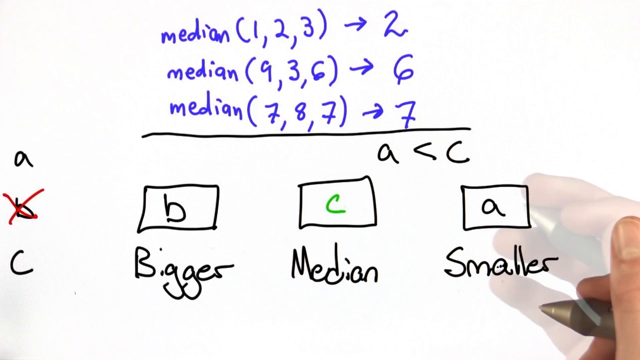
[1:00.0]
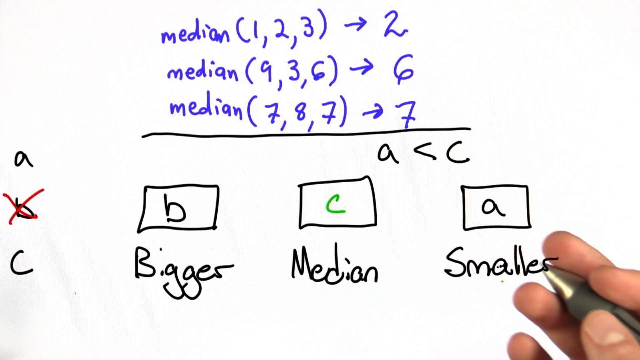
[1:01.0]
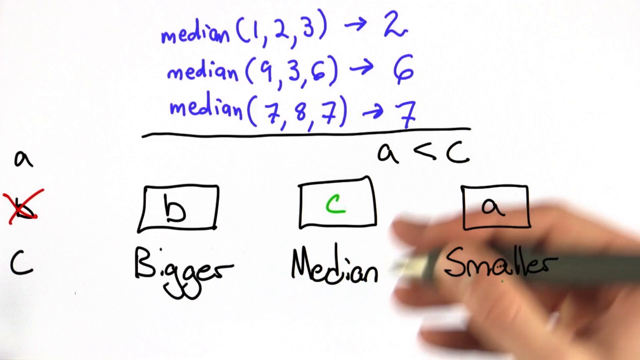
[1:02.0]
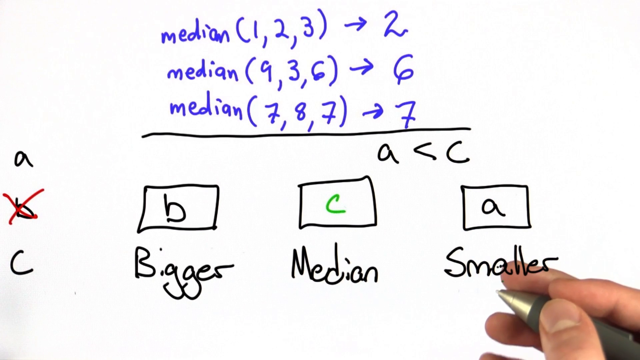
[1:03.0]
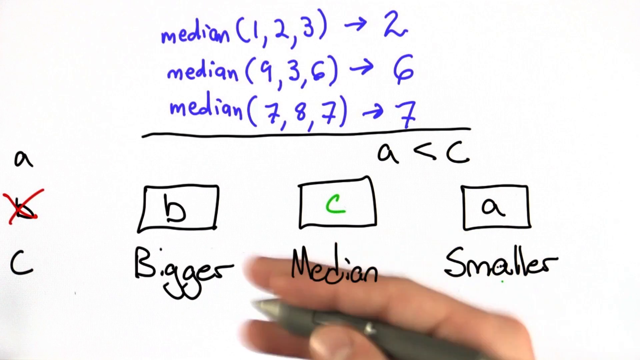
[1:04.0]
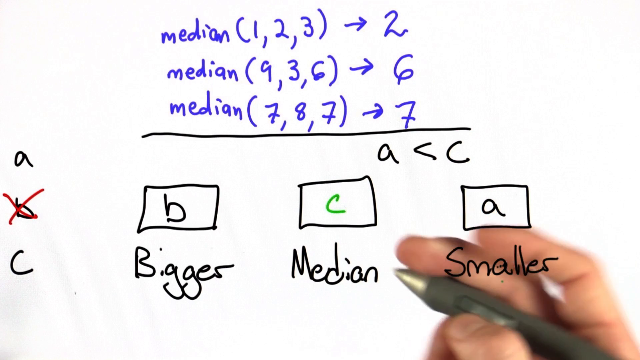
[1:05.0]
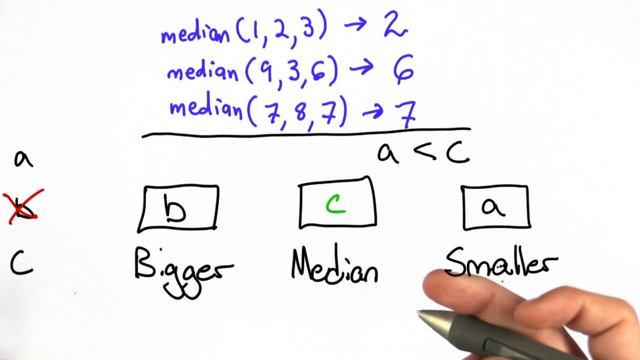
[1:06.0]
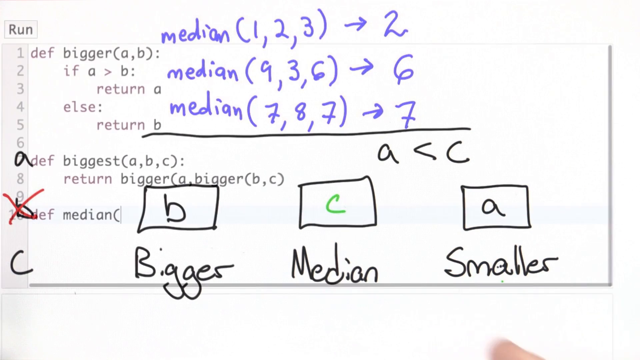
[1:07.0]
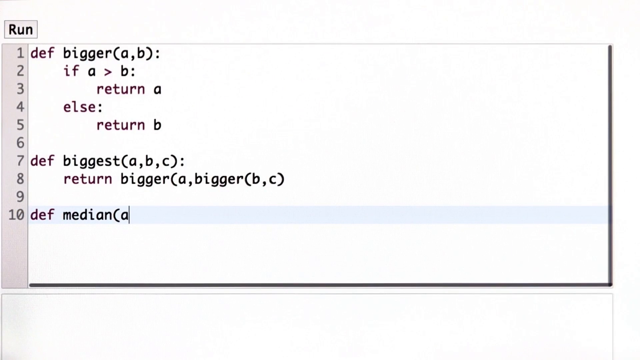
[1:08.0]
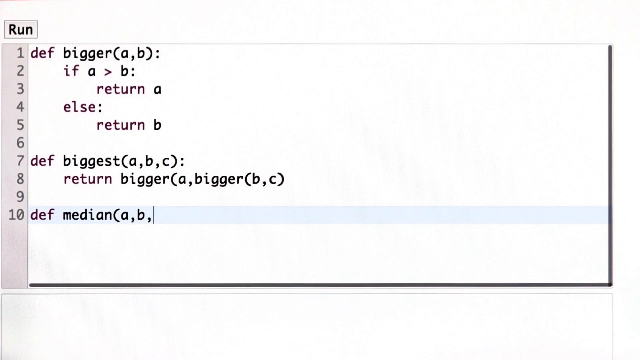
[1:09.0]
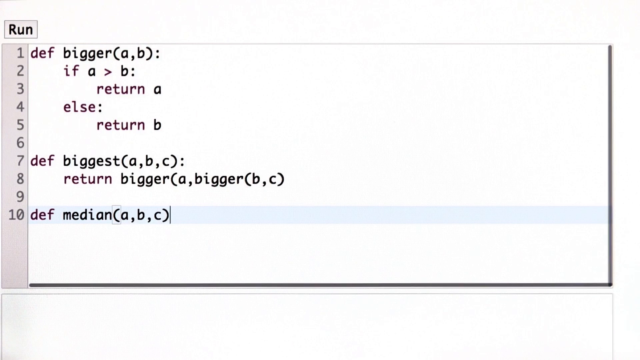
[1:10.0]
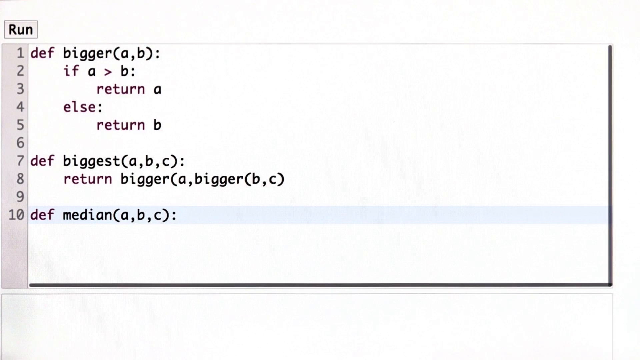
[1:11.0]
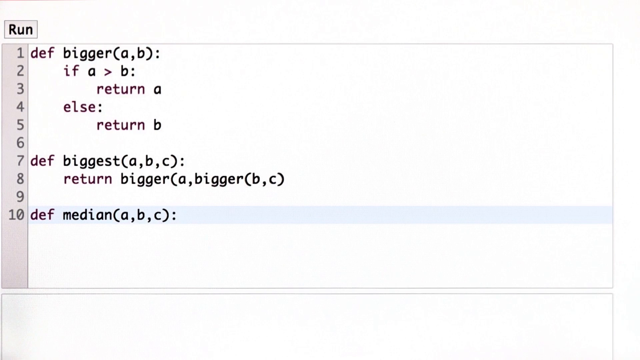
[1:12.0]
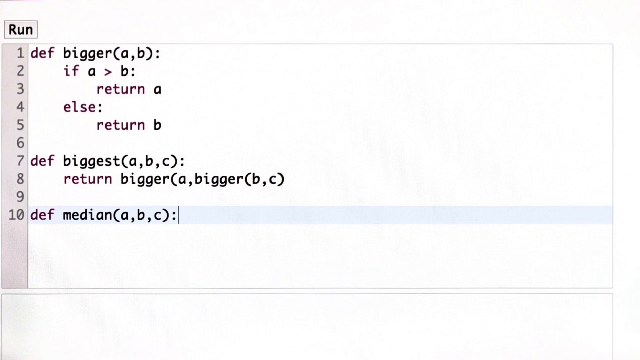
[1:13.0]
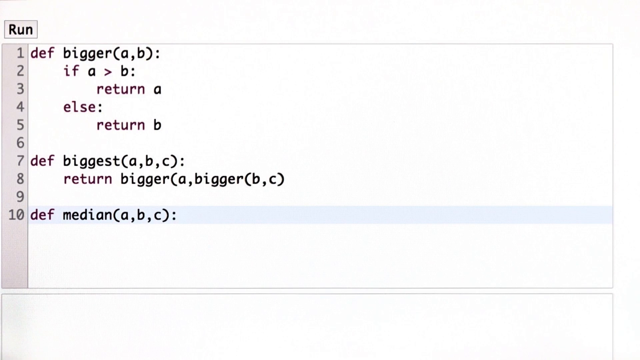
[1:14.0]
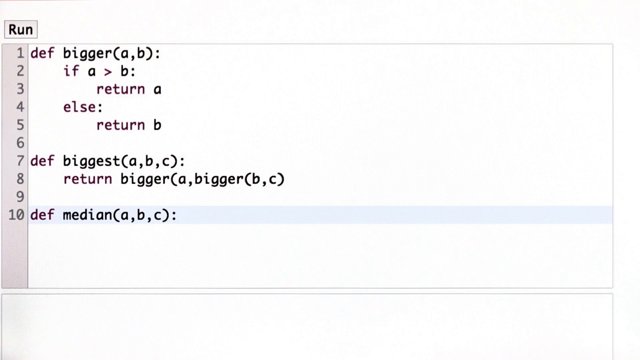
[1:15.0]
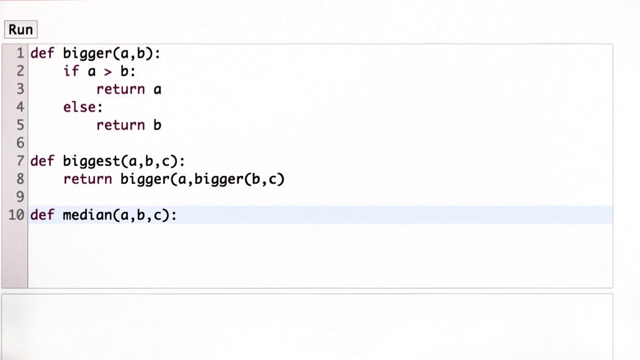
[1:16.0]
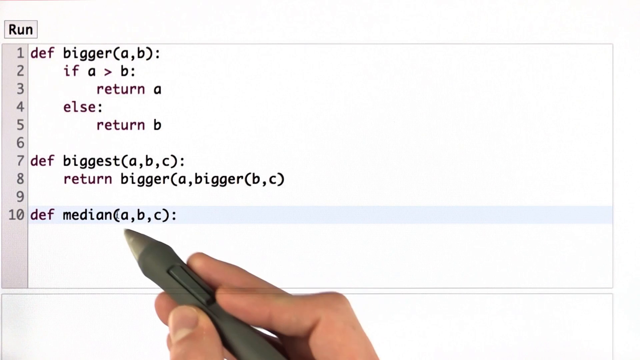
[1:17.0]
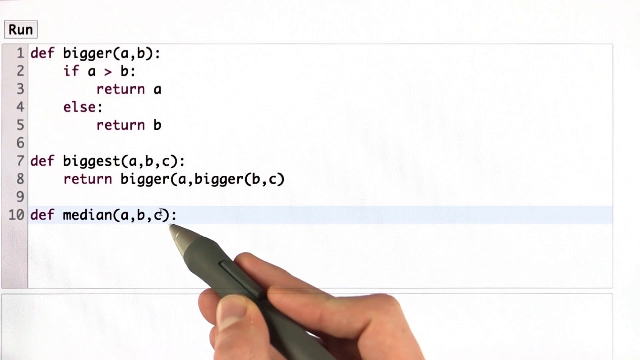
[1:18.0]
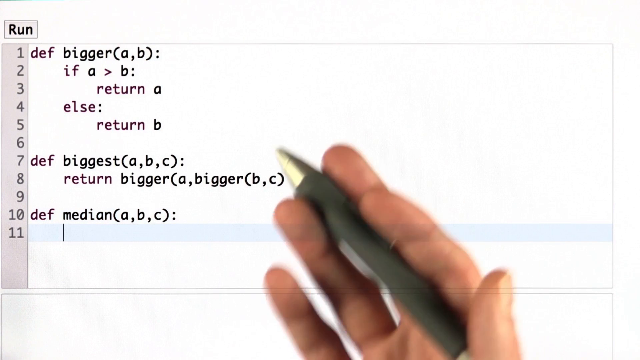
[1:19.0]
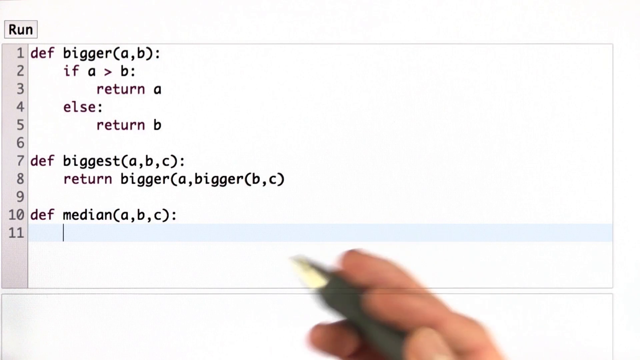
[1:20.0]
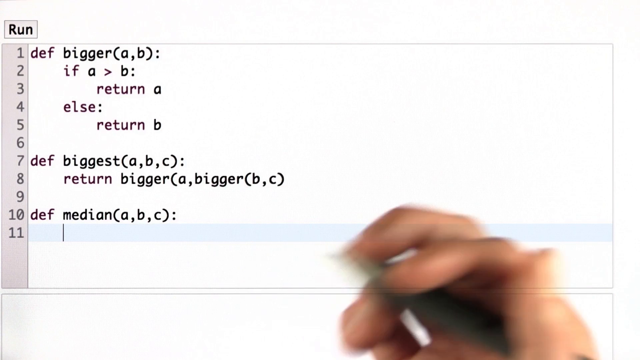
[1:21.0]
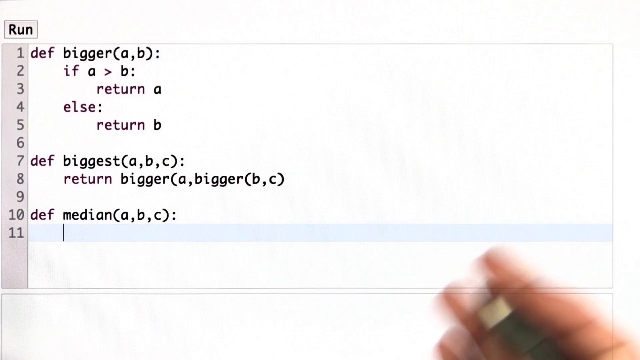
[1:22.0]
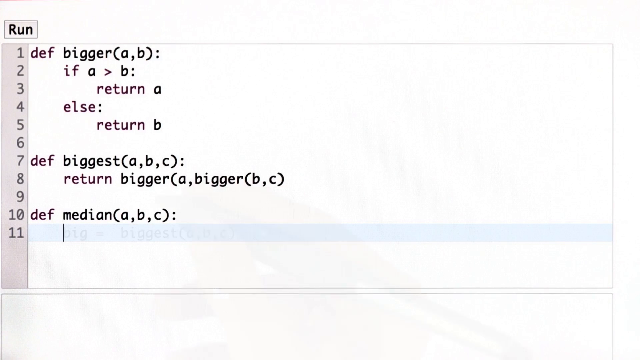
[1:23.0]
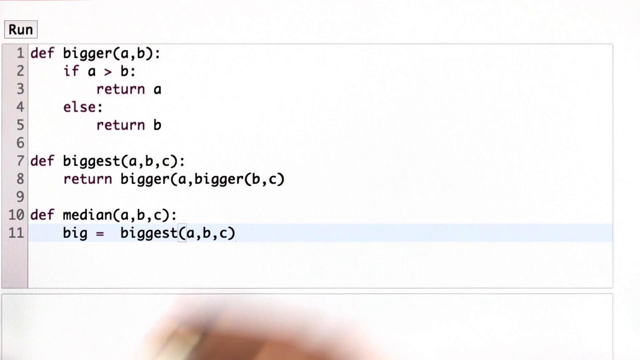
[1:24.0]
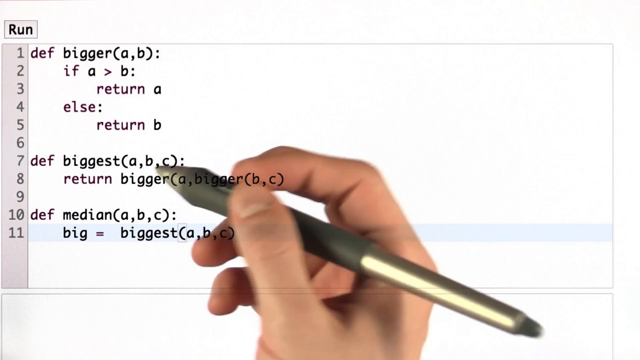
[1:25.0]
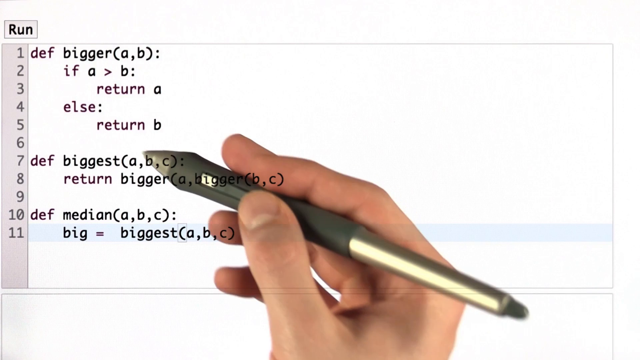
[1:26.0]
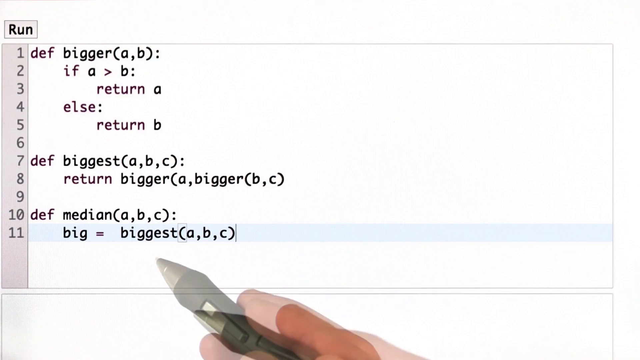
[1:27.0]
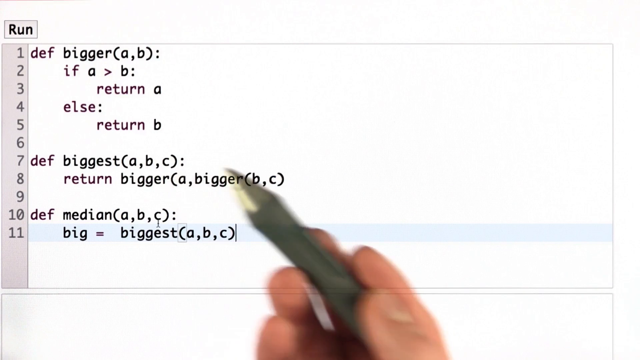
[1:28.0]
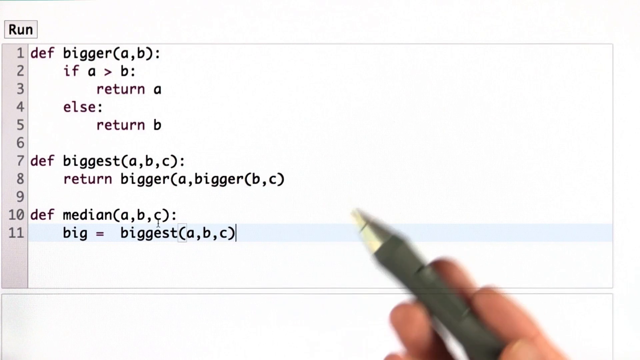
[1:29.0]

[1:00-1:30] The screen still shows that the median of 1, 2, 3 is 2, the median of 9, 3, 6 is 6, and the median of 7, 8, 7 is 7, all underlined with a black marker. The options A, B, C are on the screen, along with "bigger", "medium" and "smaller", with boxes on top of each respectively. For bigger there is option B, for medium there is option C written in green marker, and for smaller there is option A written in black marker, for the case where A is less than C. The person then seems to be writing a program of some sort, apparently Python code, with brackets and the letters A, B, C, and a line that apparently sets big equal to the biggest of A, B and C.